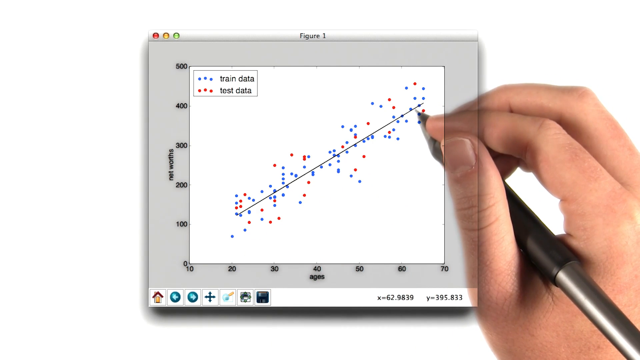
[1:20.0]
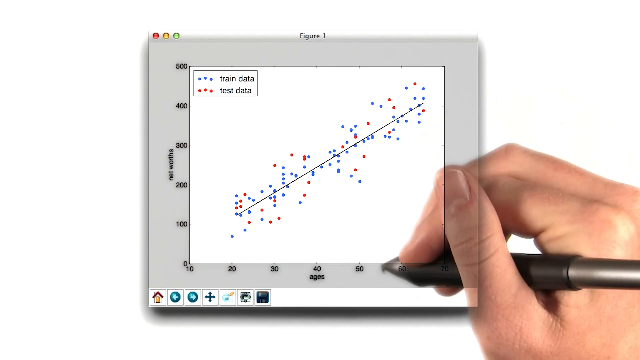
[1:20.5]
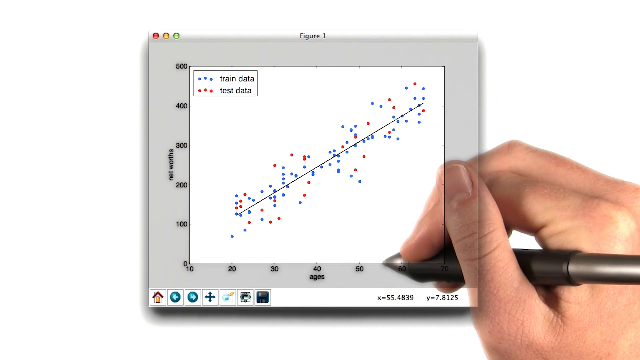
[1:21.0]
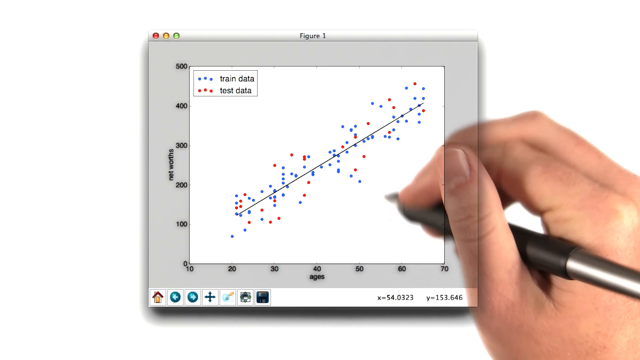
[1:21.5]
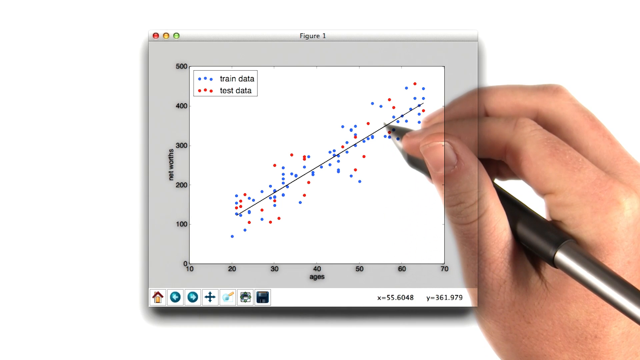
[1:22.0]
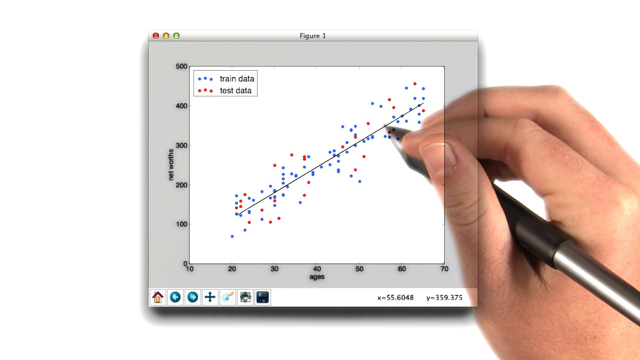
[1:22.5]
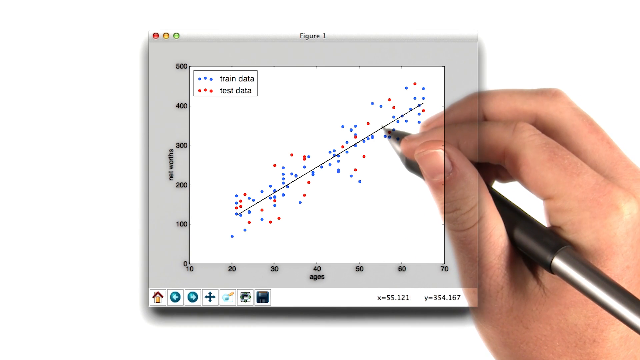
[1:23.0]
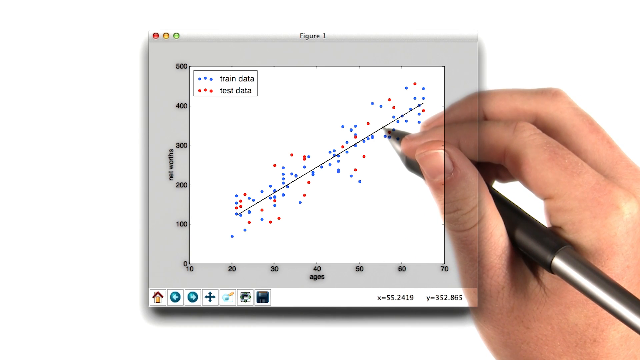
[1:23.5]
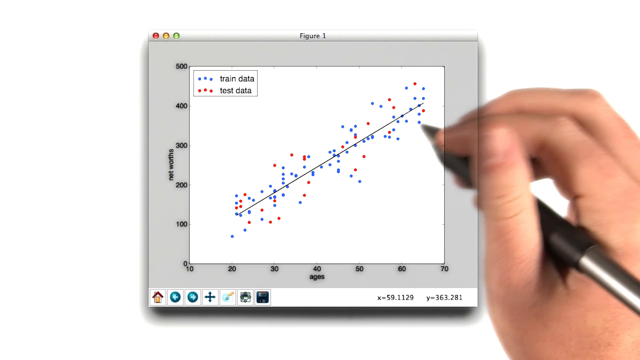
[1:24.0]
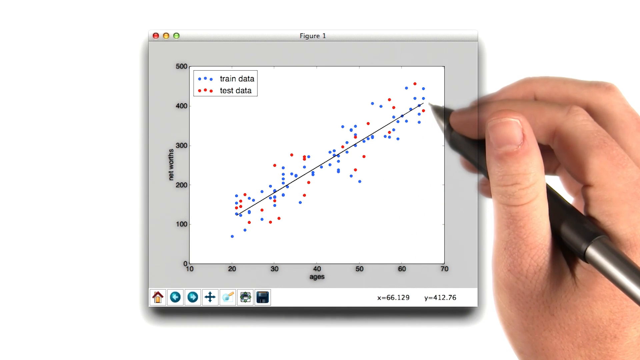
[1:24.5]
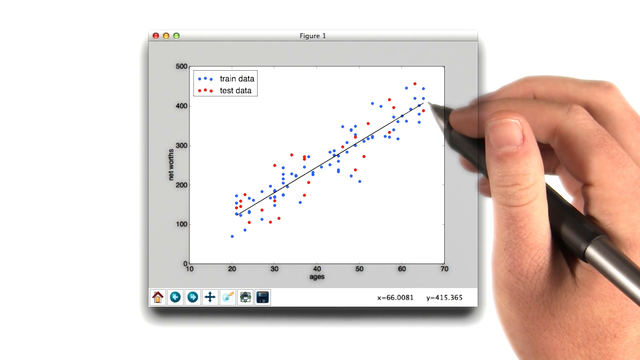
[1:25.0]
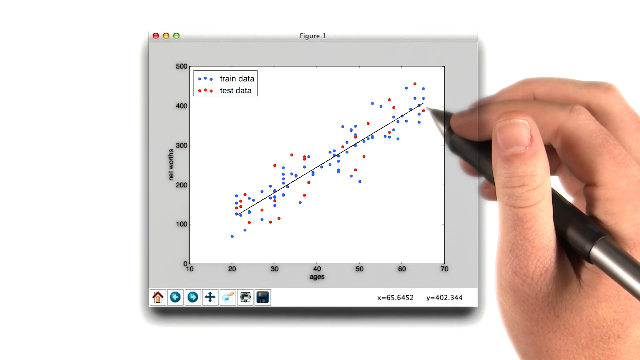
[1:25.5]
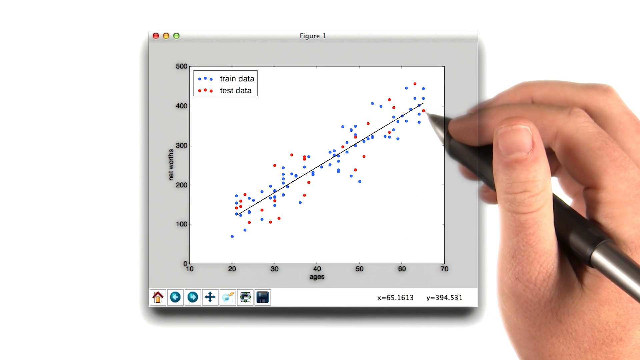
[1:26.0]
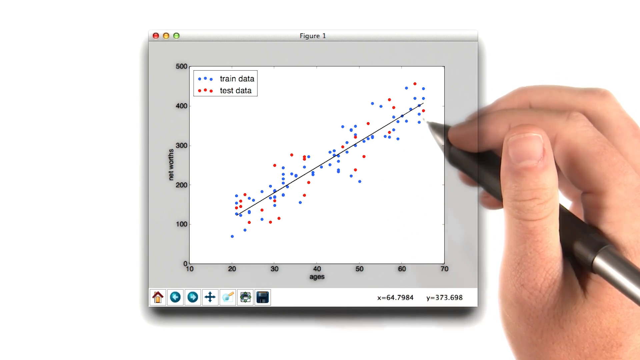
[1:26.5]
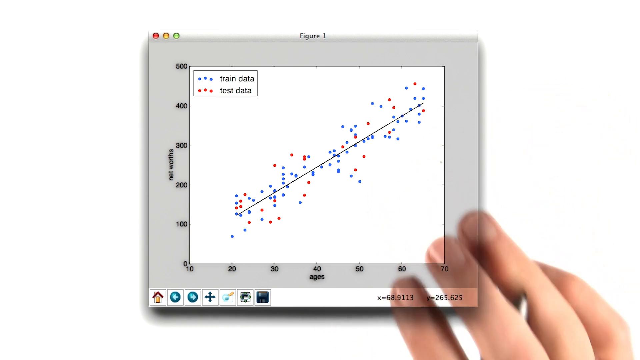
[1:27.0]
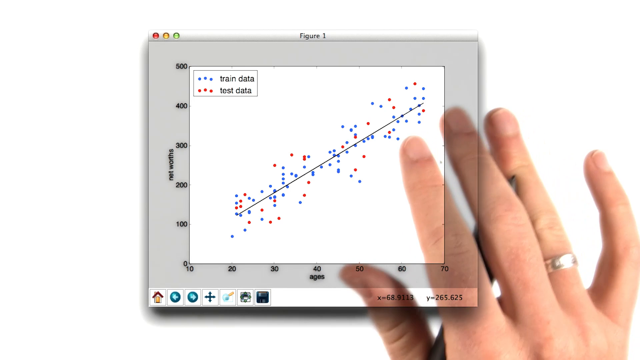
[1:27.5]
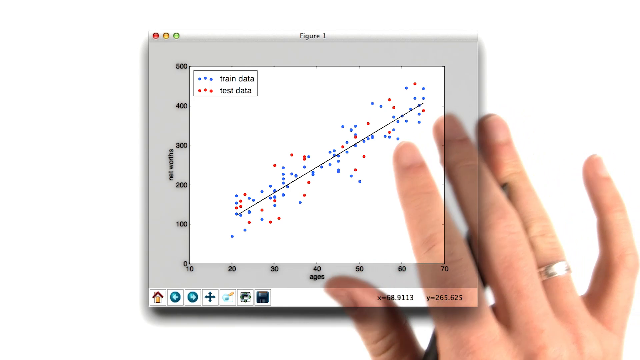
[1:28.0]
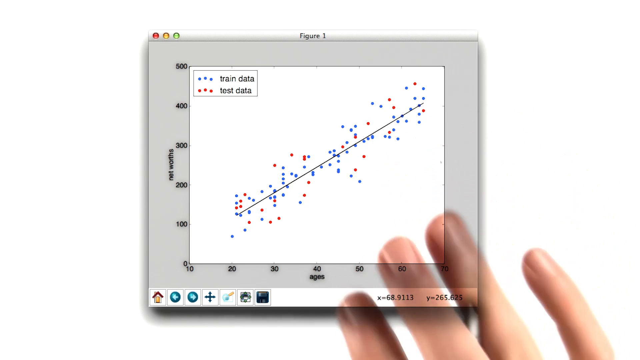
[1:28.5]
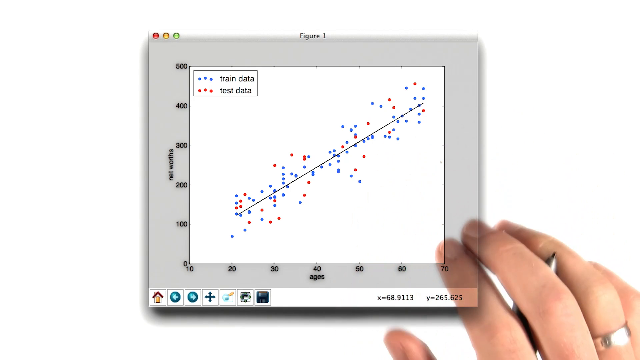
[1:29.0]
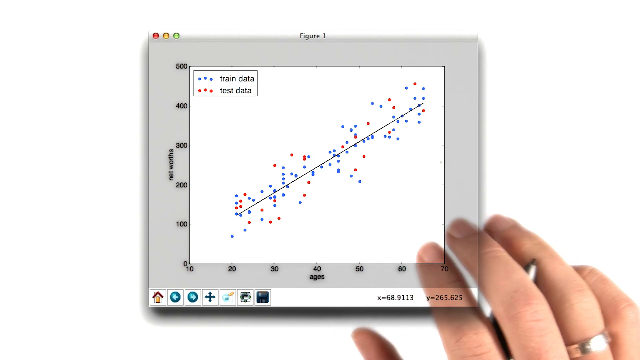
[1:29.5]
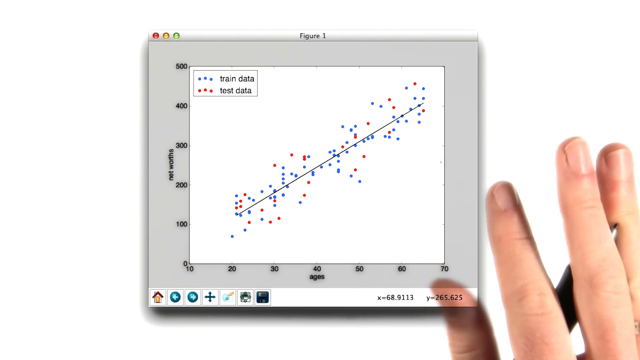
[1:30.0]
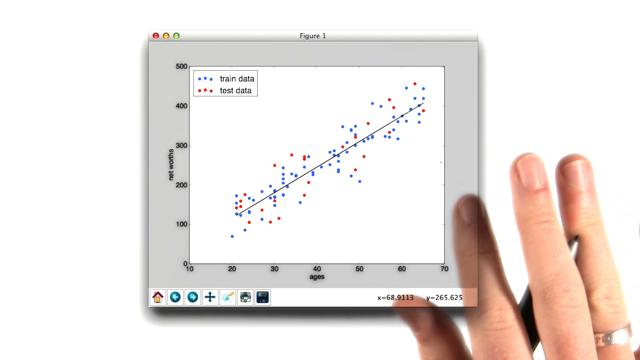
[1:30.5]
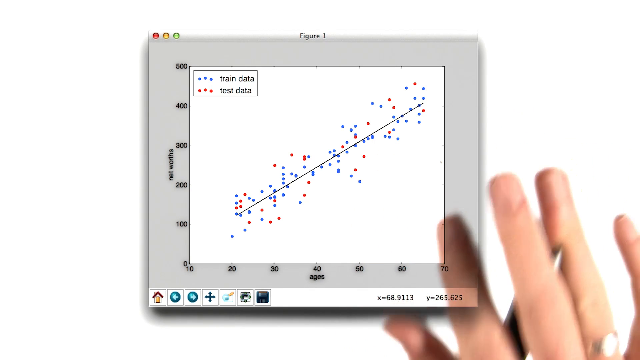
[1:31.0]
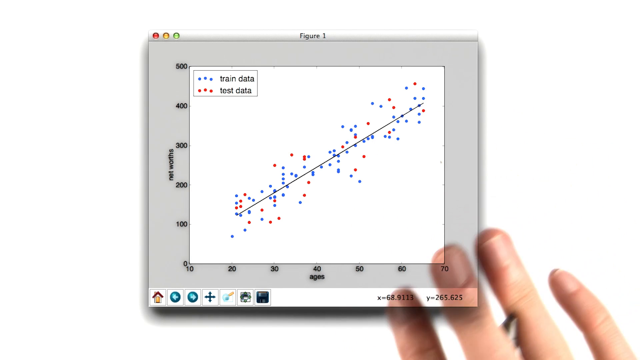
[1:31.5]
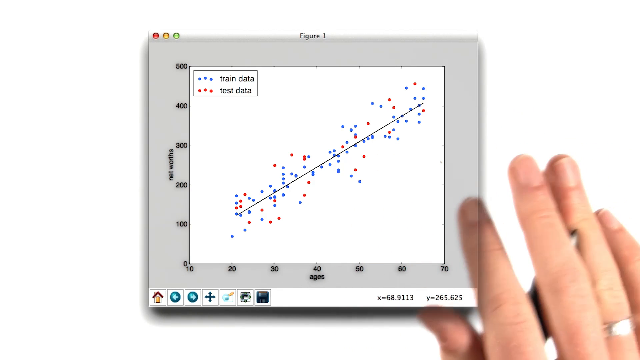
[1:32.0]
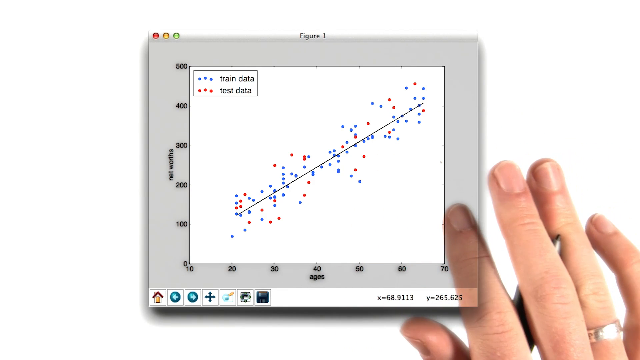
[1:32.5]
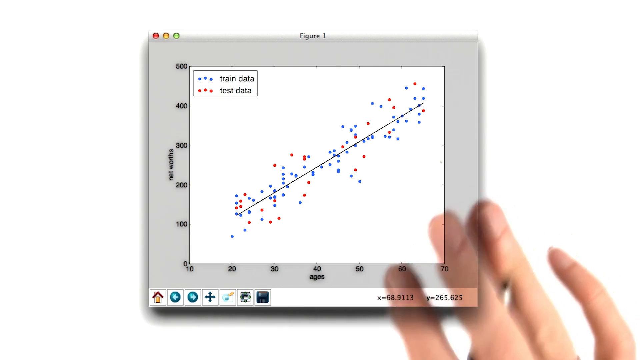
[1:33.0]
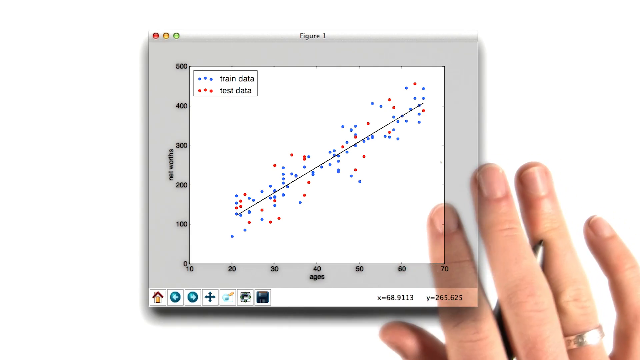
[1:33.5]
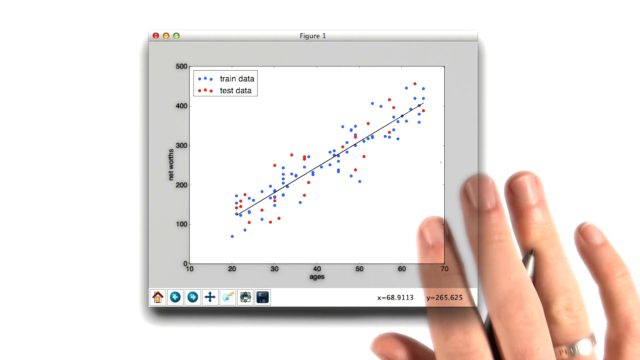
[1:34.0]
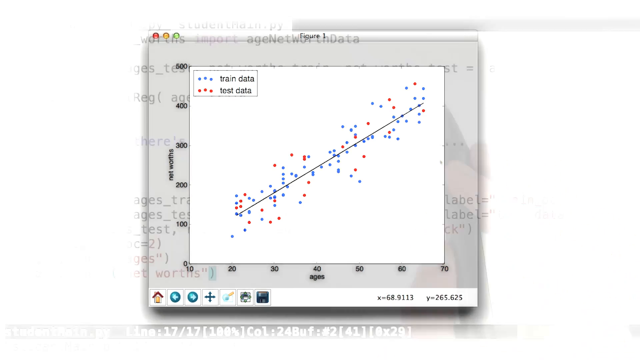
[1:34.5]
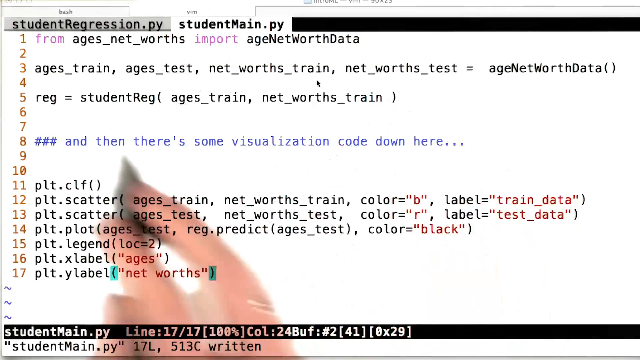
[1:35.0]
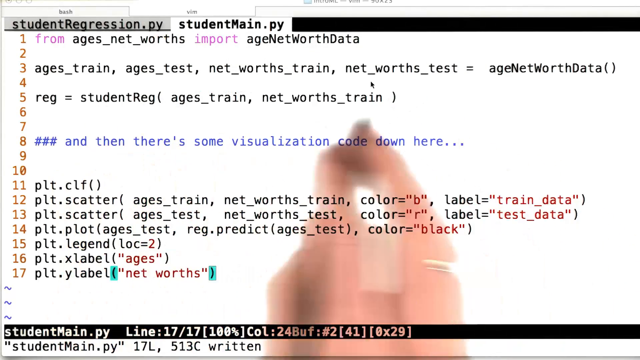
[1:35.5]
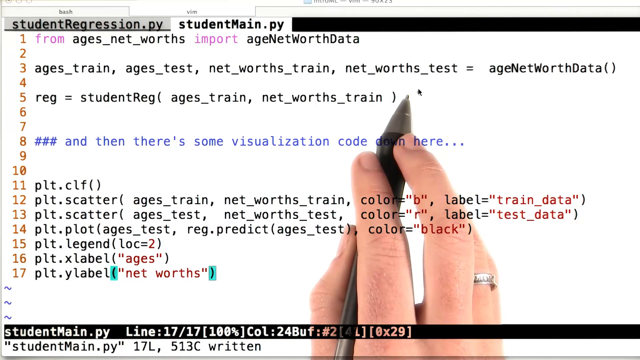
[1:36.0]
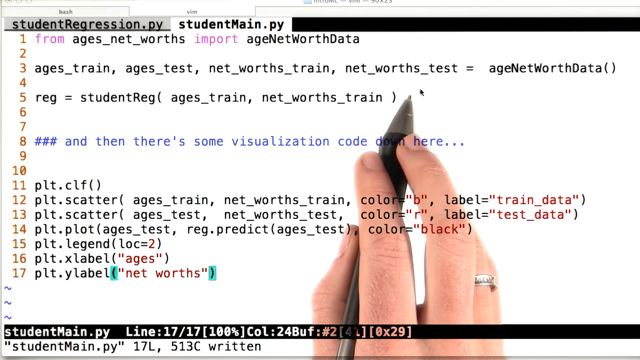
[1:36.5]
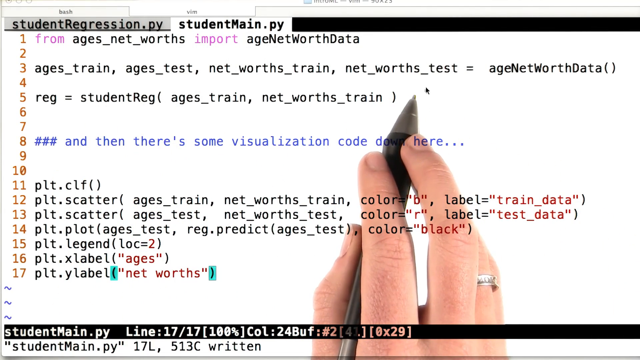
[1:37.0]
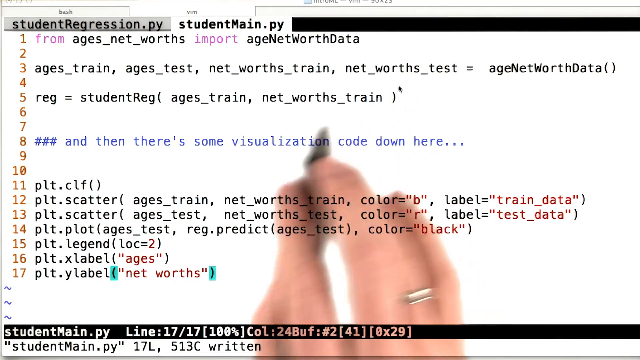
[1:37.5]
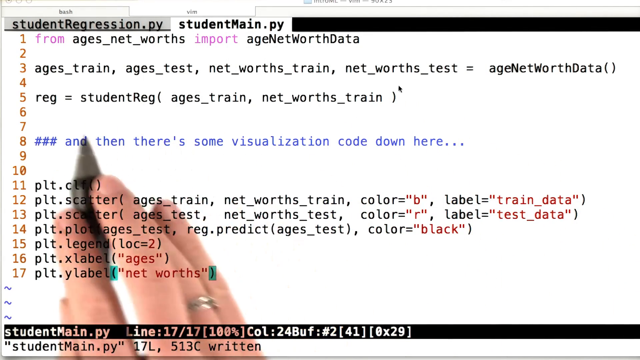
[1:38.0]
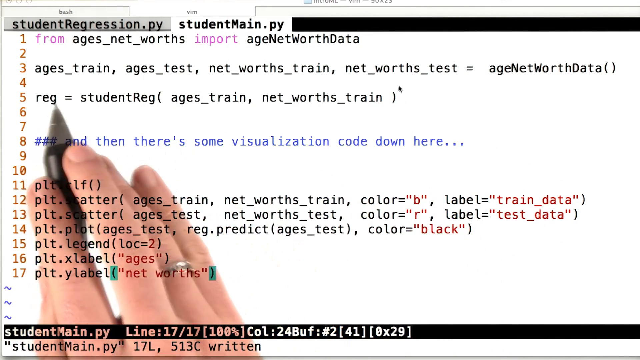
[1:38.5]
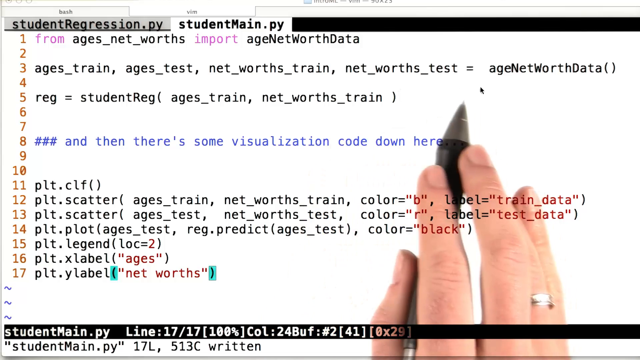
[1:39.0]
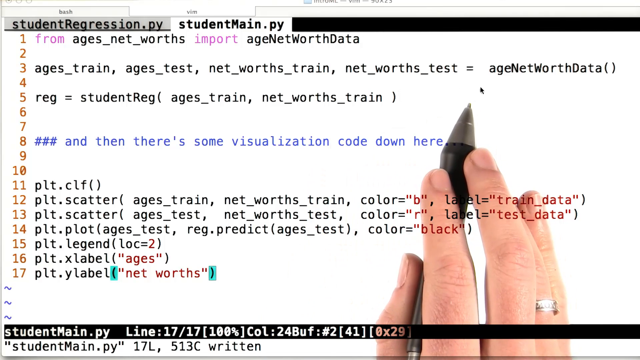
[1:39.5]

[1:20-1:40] The graph with the colour-coded dots remains on screen, blue for training data and red for lost data. The person's hand lies flat, obscuring the pen used for pointing, and gestures back and forth. The view then moves to Python code, which appears to use a Python library to generate a scatterplot from training data, including a PLT scatter call. Data seems to be pulled from a function, with multiple variables assigned to its output, and the plotting is probably done with pandas.